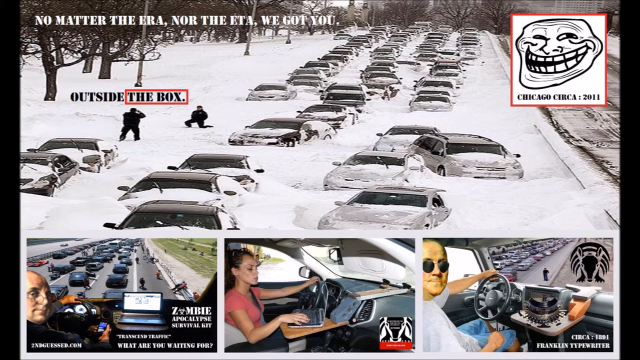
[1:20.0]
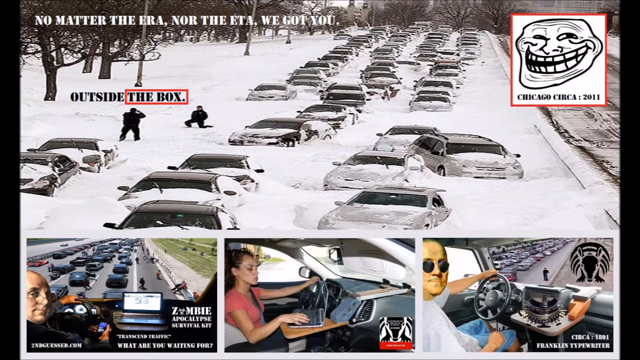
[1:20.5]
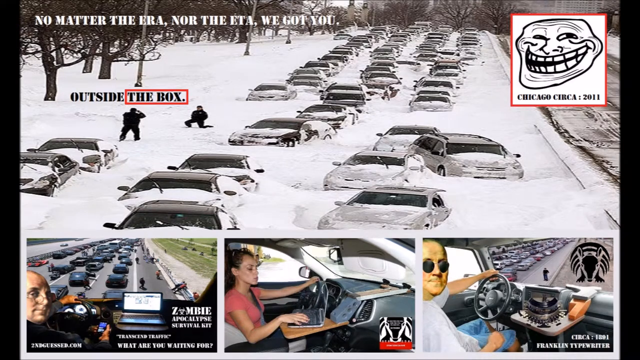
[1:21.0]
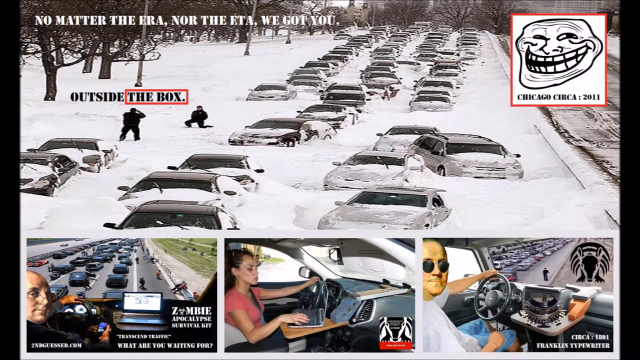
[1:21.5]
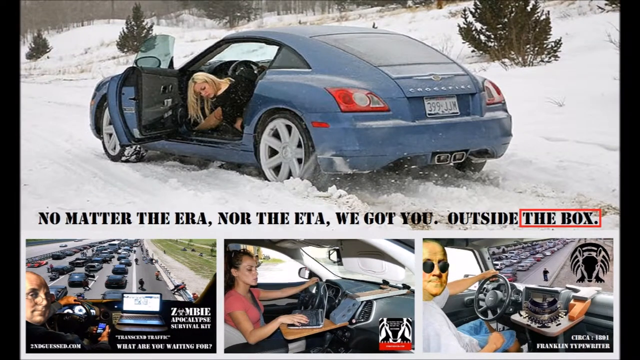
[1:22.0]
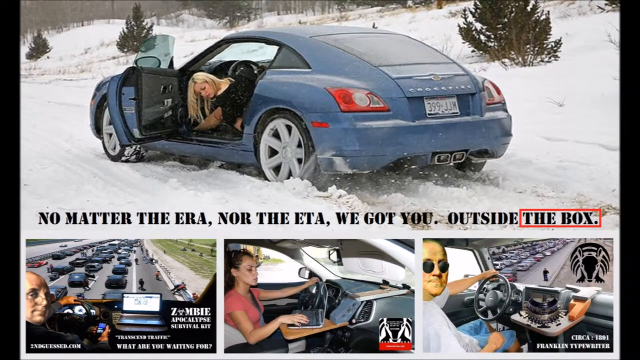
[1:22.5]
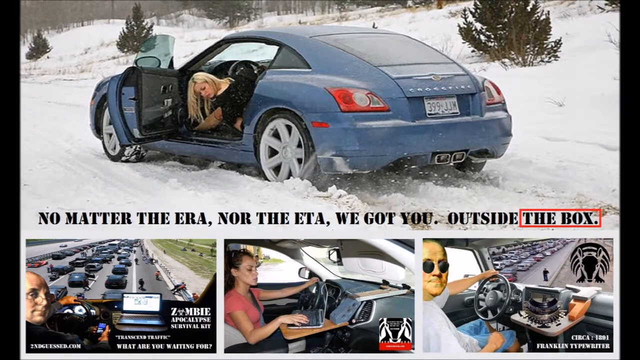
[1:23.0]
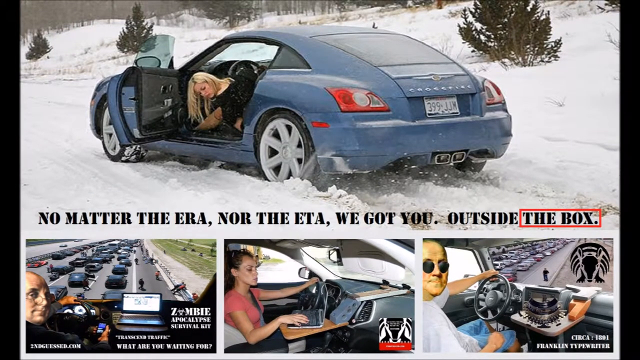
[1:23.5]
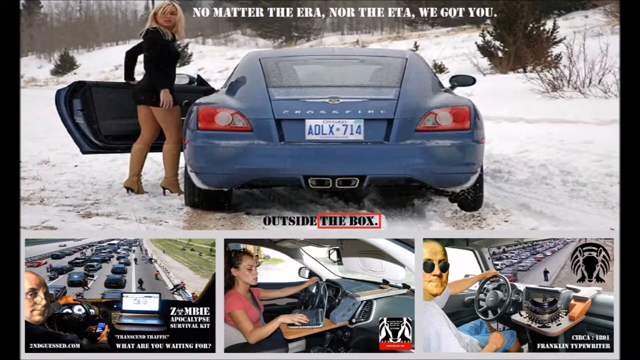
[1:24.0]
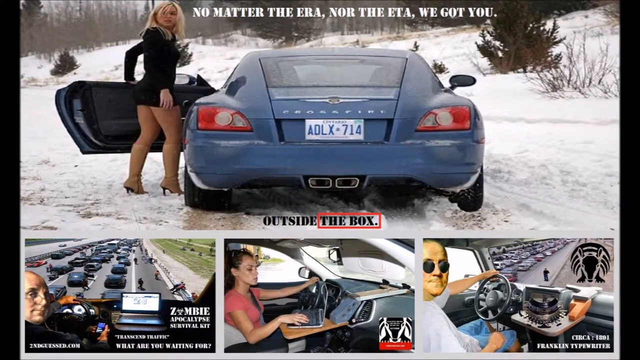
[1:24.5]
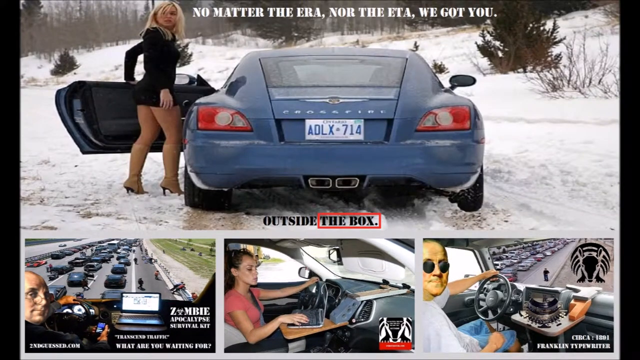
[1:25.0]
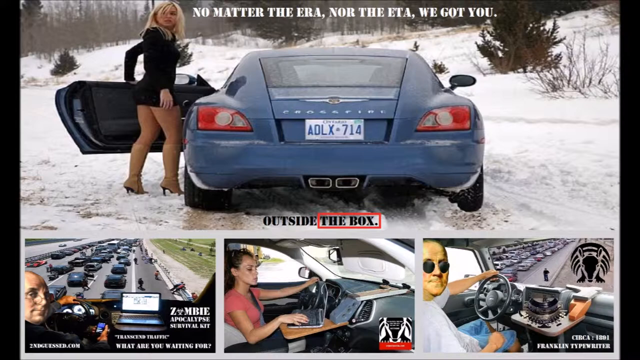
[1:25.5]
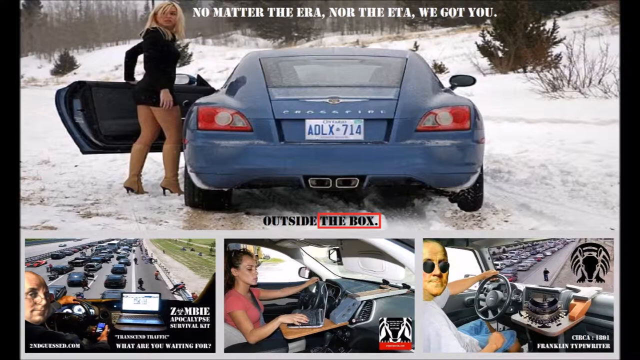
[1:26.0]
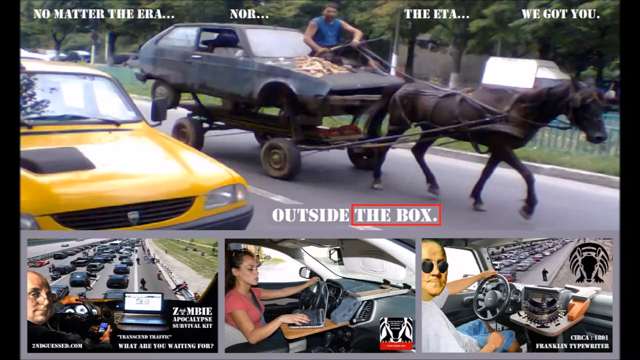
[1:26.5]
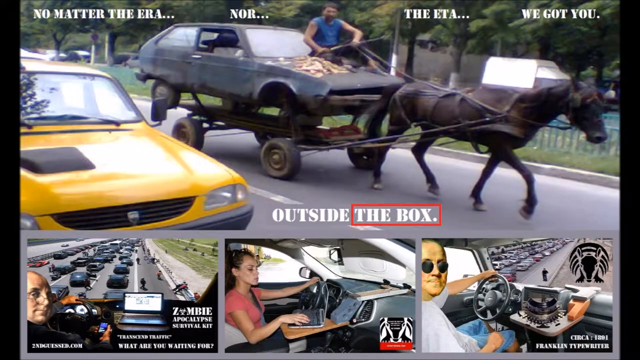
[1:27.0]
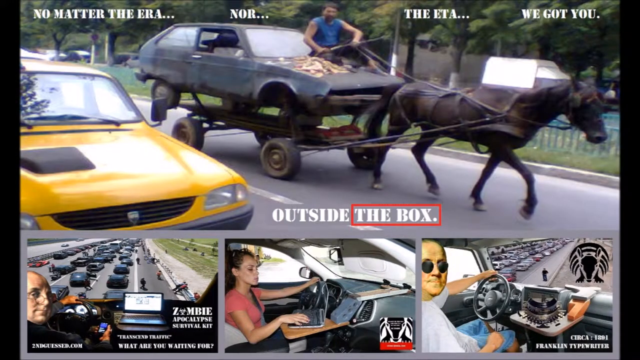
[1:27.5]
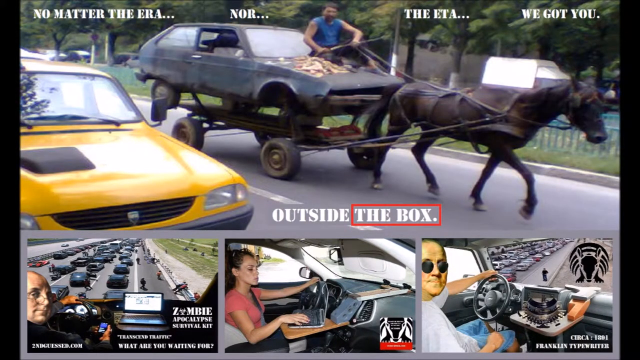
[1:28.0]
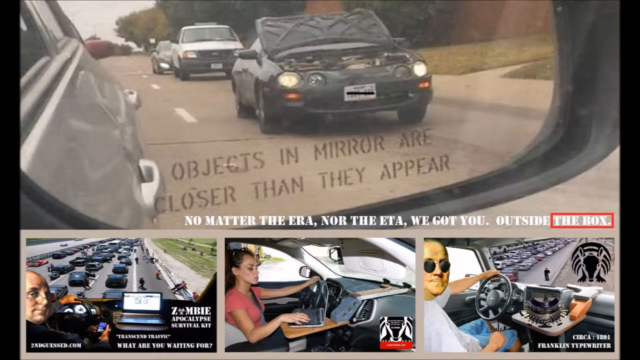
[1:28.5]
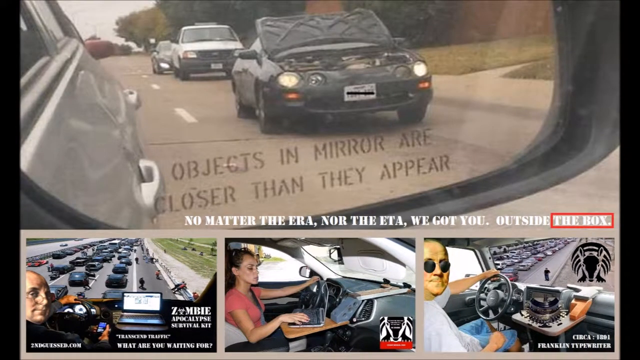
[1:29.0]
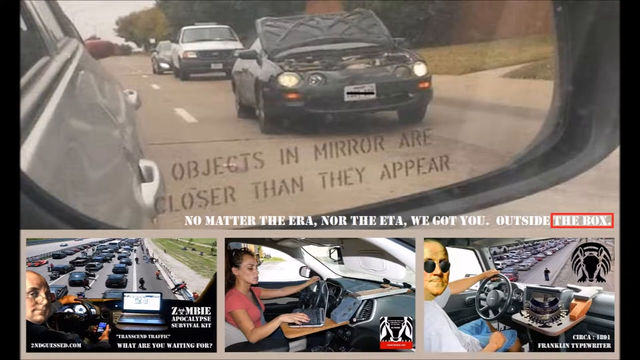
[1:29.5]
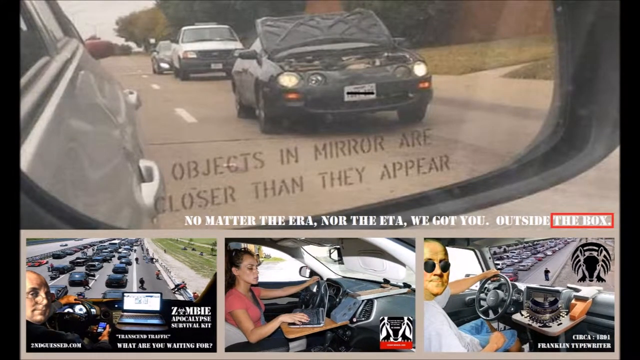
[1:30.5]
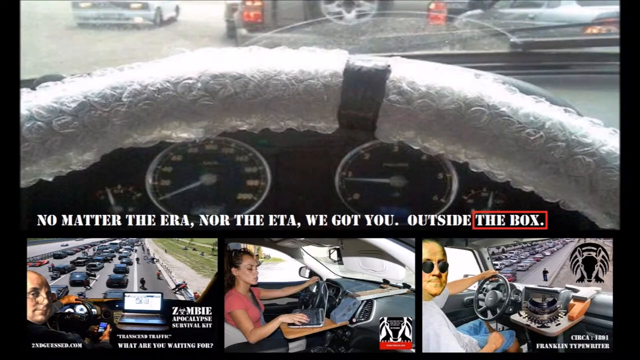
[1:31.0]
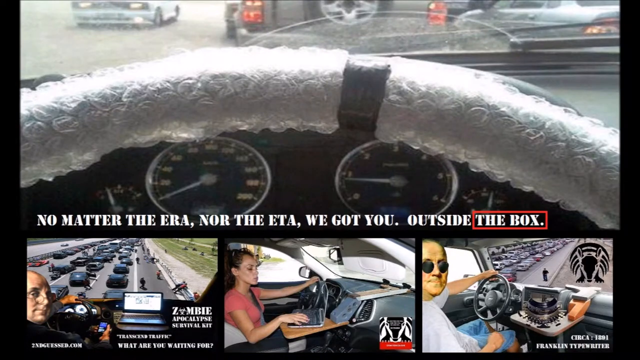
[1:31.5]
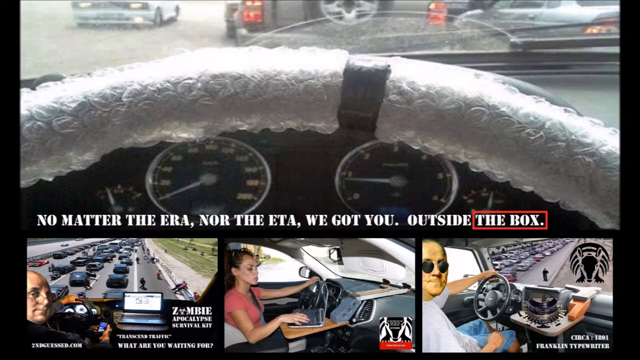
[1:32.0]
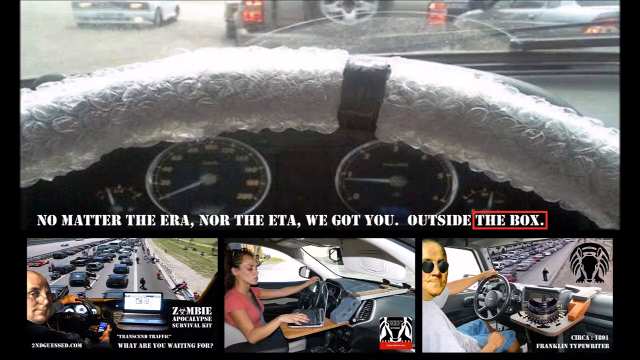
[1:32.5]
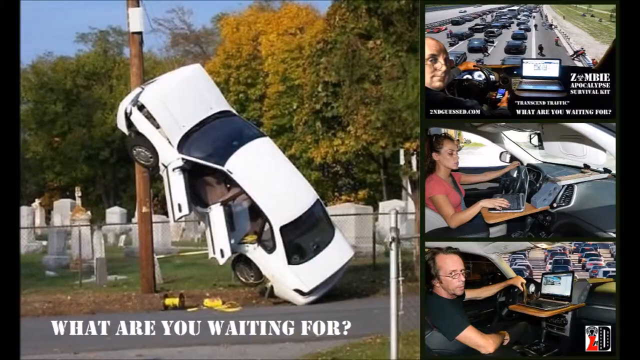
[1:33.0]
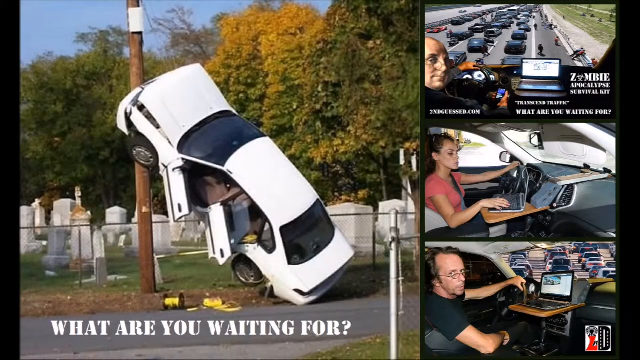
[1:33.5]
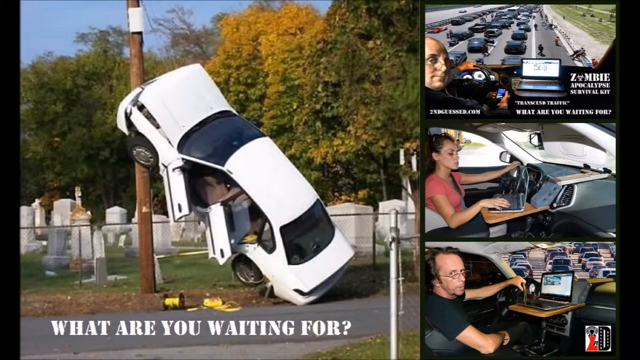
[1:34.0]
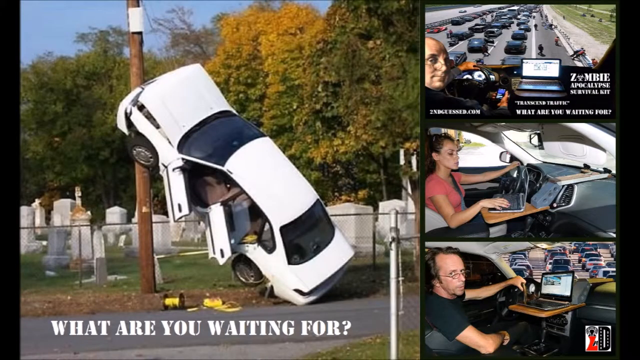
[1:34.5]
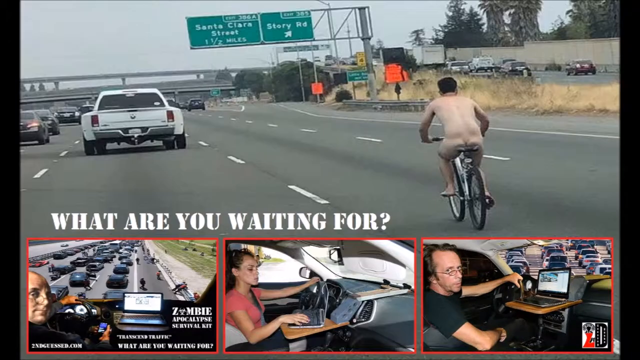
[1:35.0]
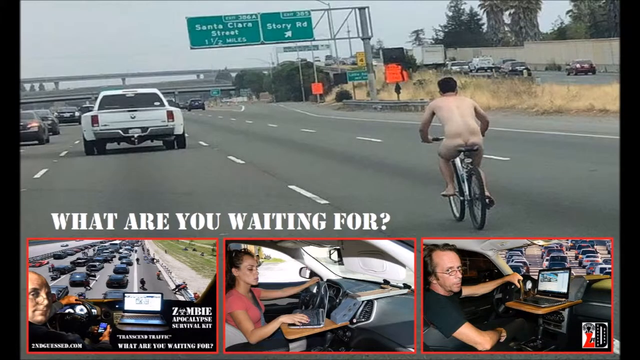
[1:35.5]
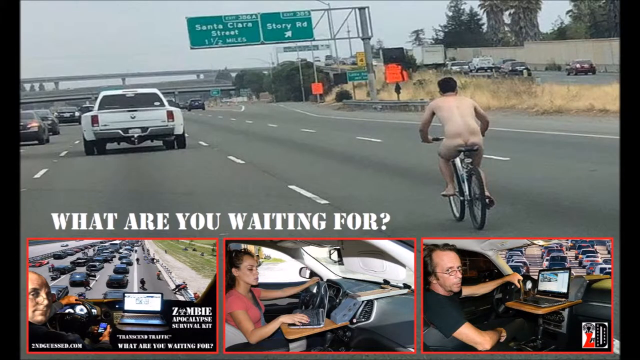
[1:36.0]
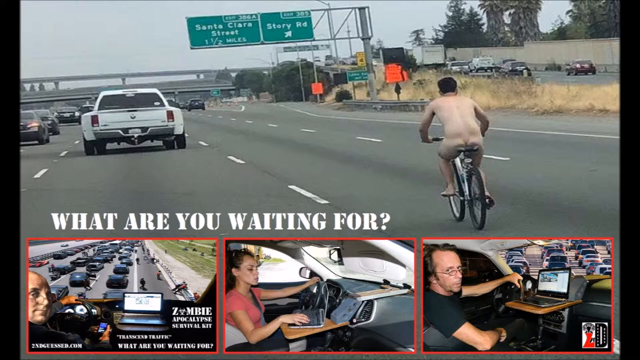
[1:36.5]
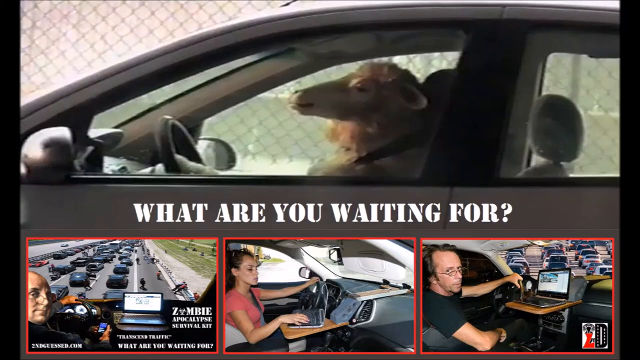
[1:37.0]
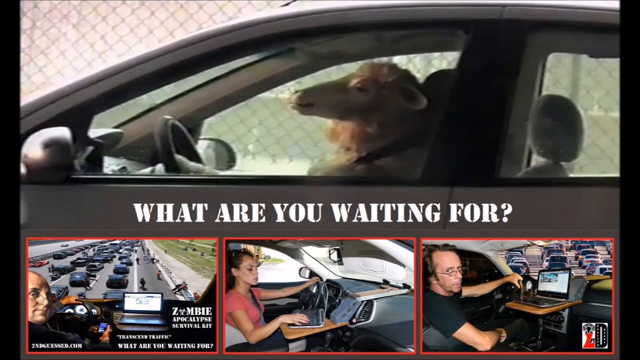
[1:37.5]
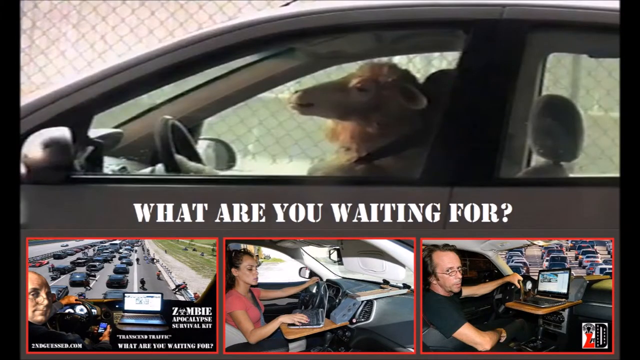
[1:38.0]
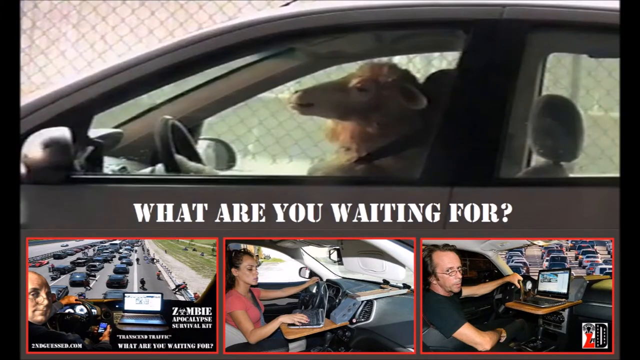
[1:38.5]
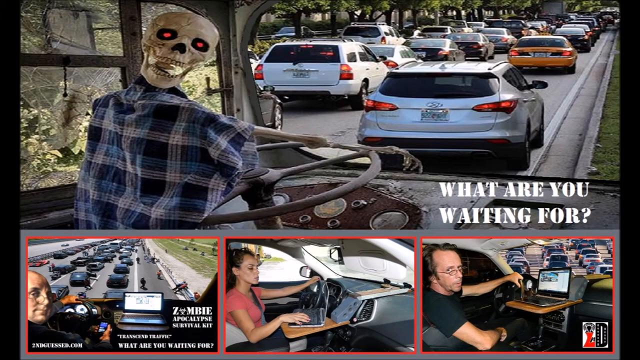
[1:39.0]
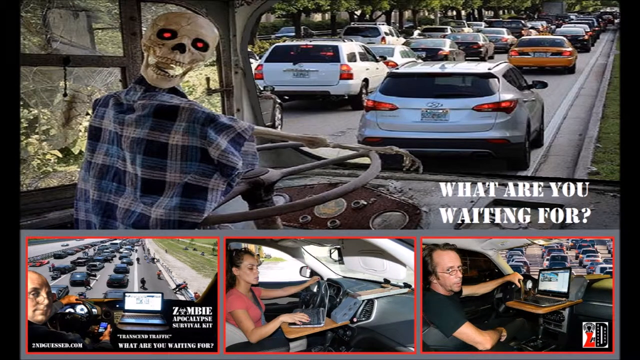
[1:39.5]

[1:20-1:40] An expensive saloon car, a blue Porsche, appears to be trapped in snow, and its female driver gets out. Outside the car she is not dressed for winter weather: she wears high heels and a black micro dress, and she is a young woman, probably in her twenties. A man has a horse and cart, with the cart carrying the wrecked remains of a car. A car mirror bears the text "objects in the mirror are closer than they appear". Inside a car, the driver has wrapped loads of bubble wrap around the entire steering wheel. A car has crashed into a huge drain pipe. A naked cyclist rides on the freeway. A man in his car wears a hat made from the head of a sheep. A skeleton drives a car.